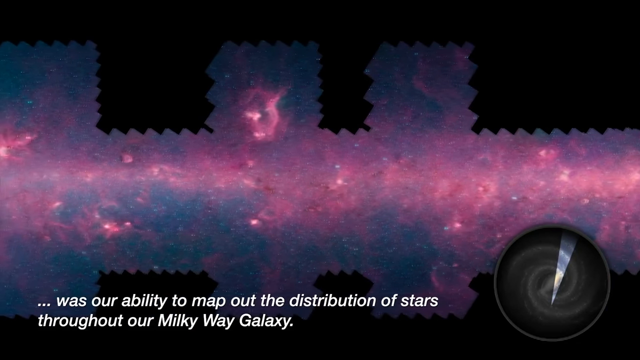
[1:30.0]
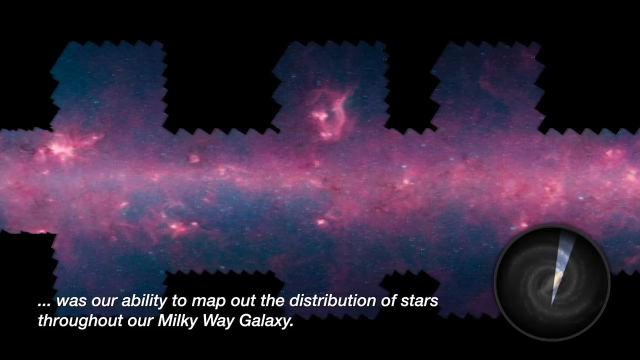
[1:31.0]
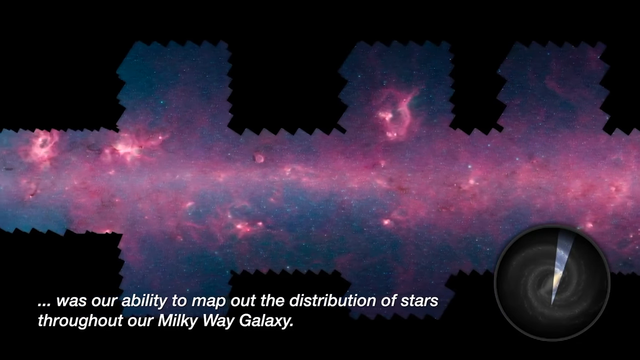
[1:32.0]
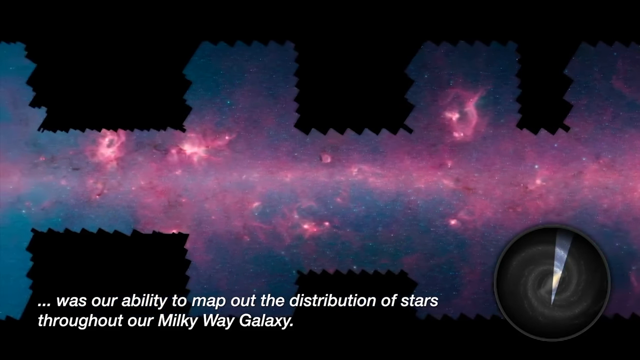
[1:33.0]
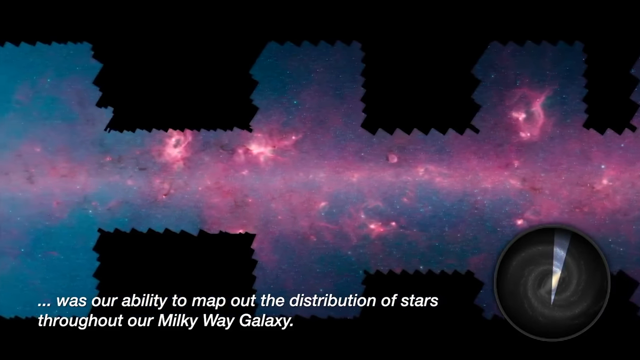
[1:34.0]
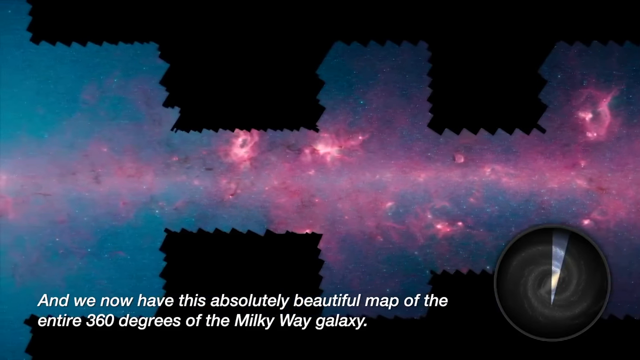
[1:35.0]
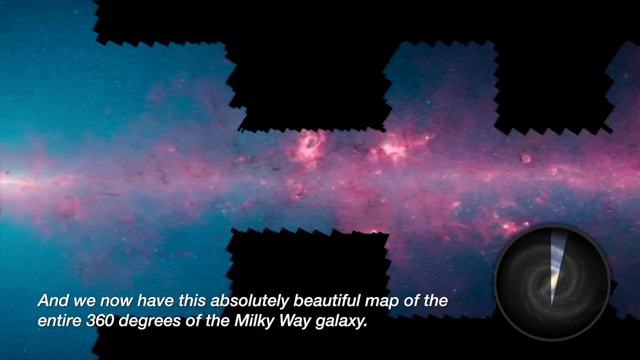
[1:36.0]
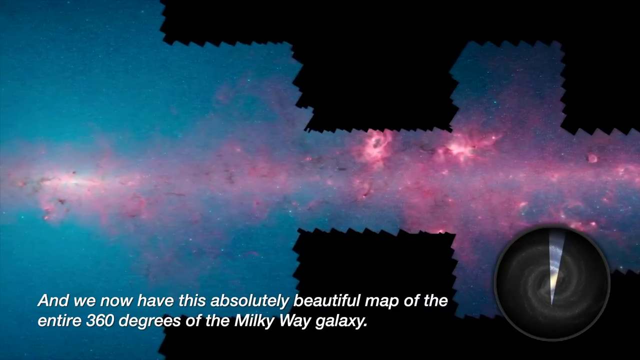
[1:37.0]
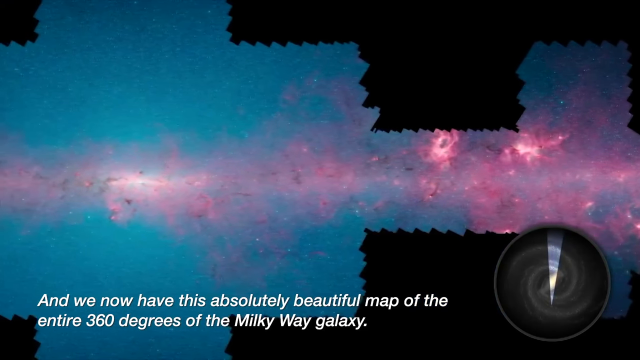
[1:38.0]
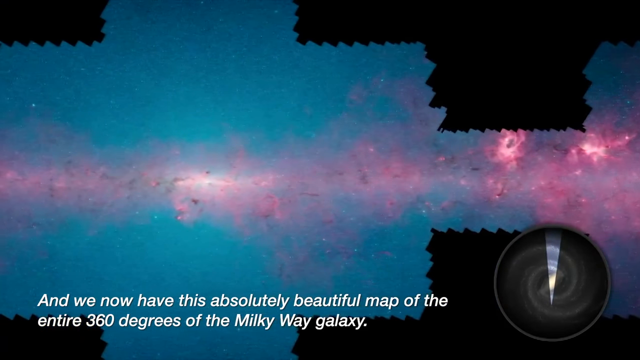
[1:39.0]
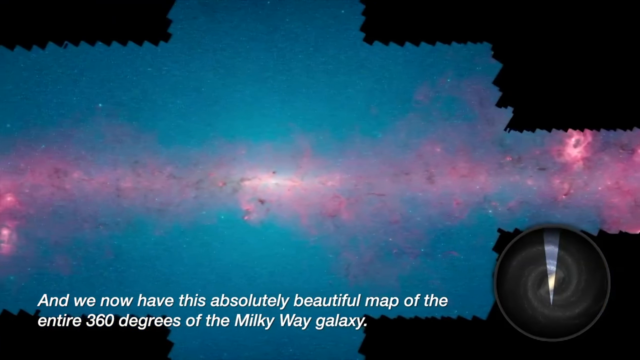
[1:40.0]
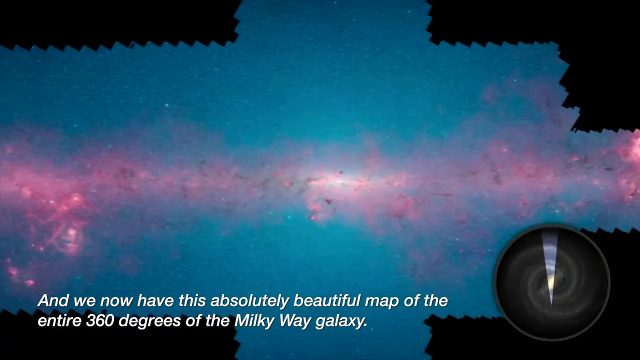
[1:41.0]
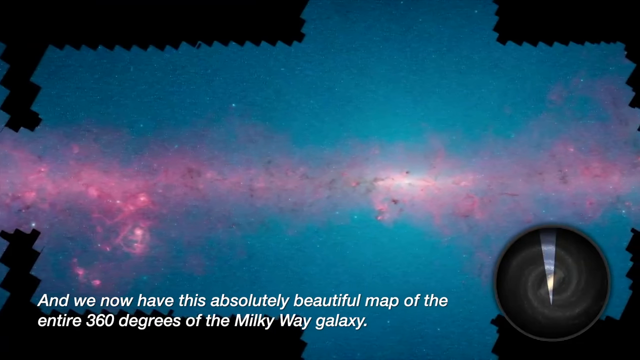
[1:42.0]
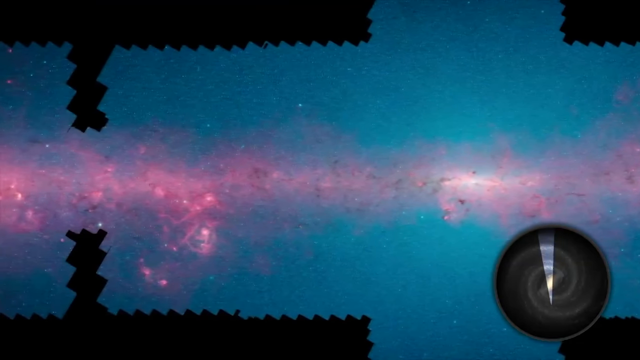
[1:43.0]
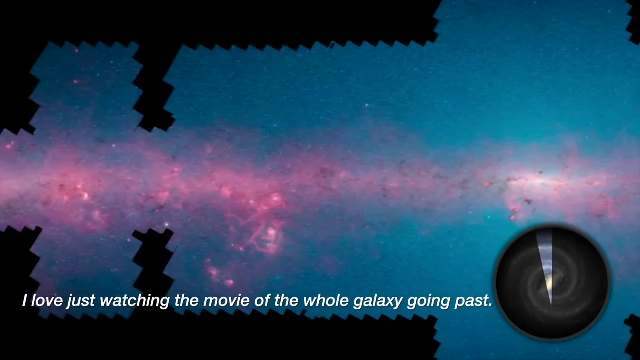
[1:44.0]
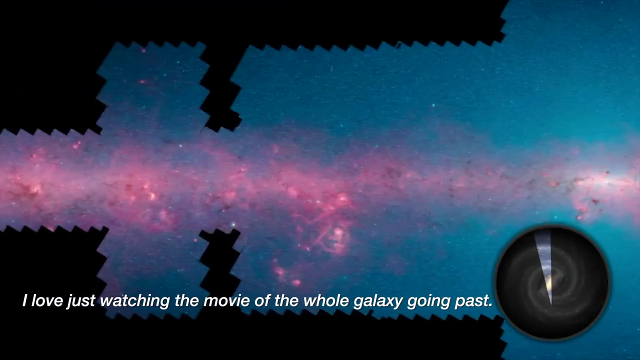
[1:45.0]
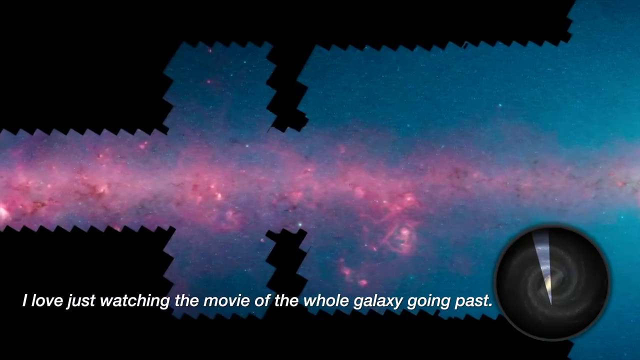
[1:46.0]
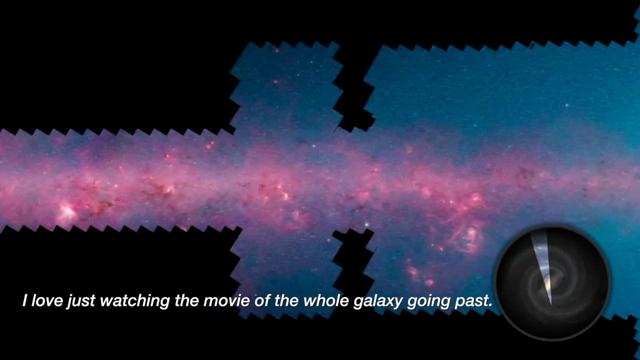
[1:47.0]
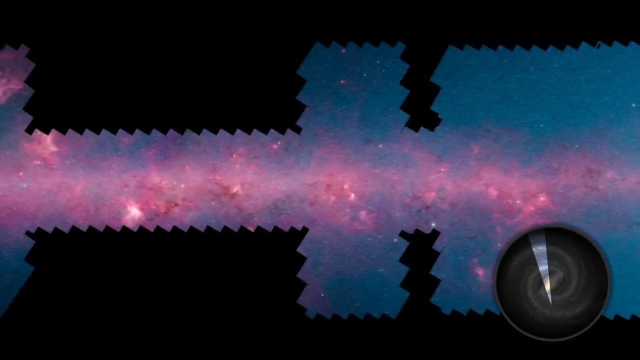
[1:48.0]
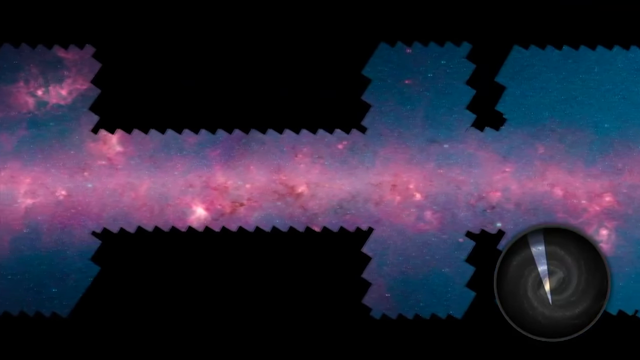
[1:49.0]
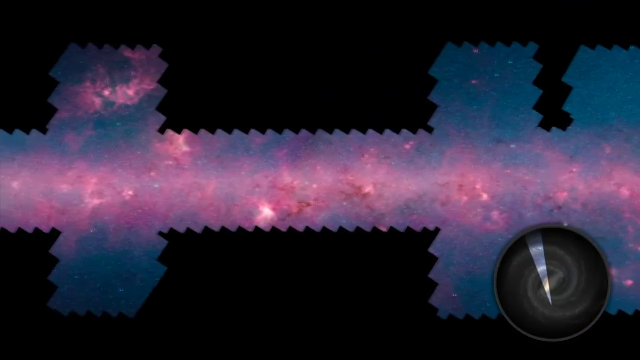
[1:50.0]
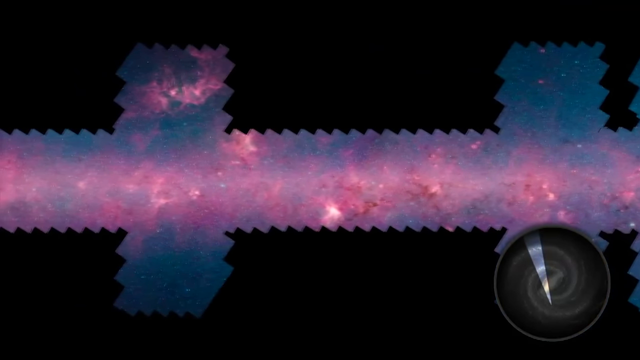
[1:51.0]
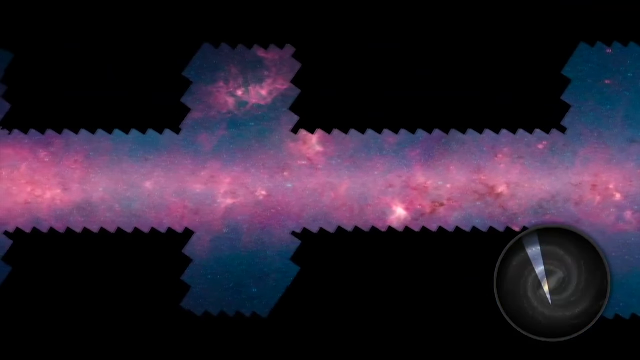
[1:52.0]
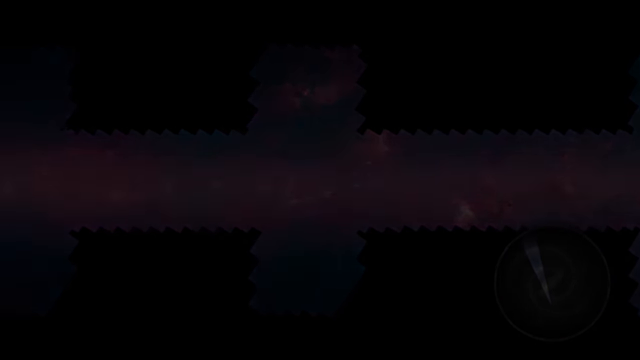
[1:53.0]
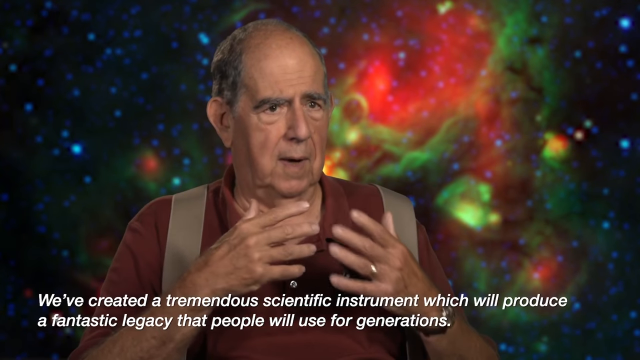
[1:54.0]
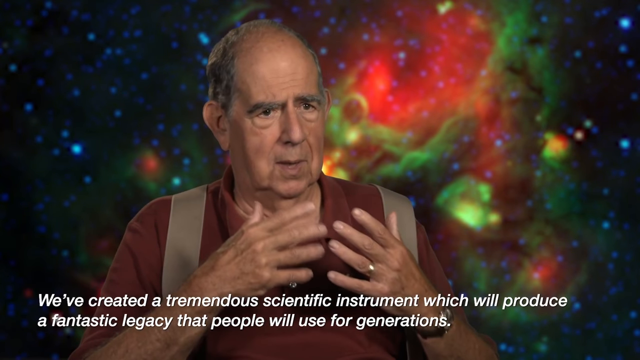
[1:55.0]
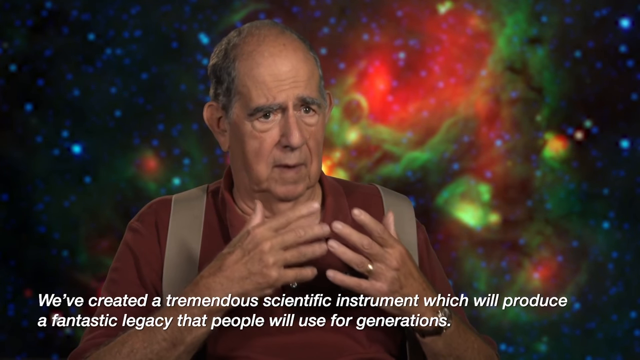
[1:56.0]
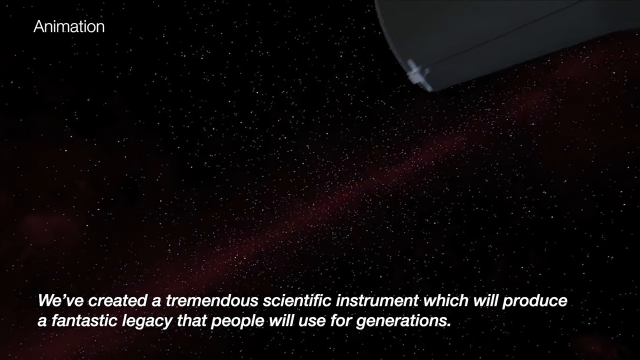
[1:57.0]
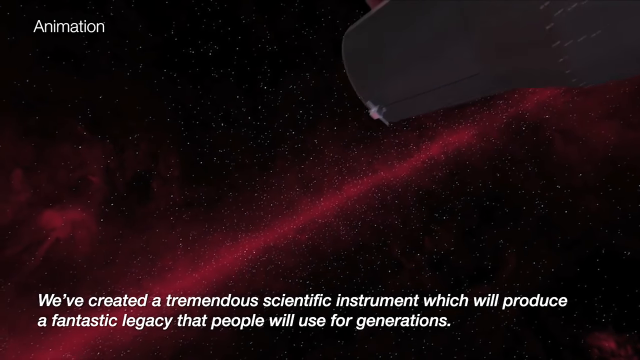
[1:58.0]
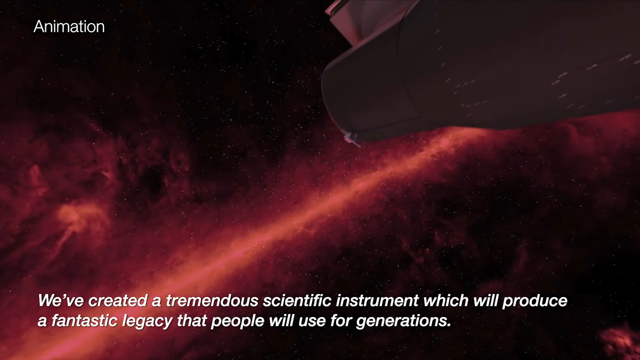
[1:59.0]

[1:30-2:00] An image of outer space, apparently computer-generated, shows a lot of purple and pink along with blue and black, plus black squares with kind of jagged borders. The view pans to the left, showing the same galaxy with the black squares over and over. At one point the black squares kind of dissipate a little, giving a somewhat better view of the galaxy. A small text box comes and goes. The view then changes to an elderly gentleman who is seated and talking while looking directly at the camera. He moves his hands, lifting them to kind of right below his chin, closes his eyes as he talks, and kind of flashes his hands toward the camera.